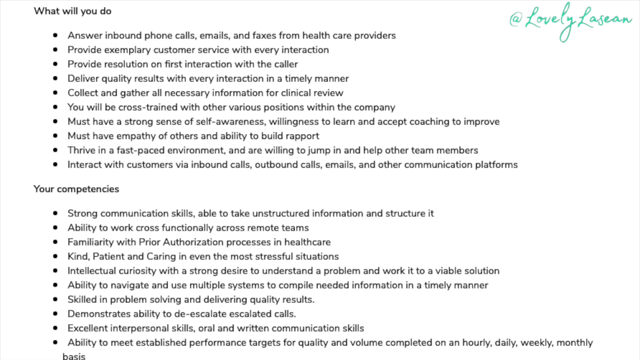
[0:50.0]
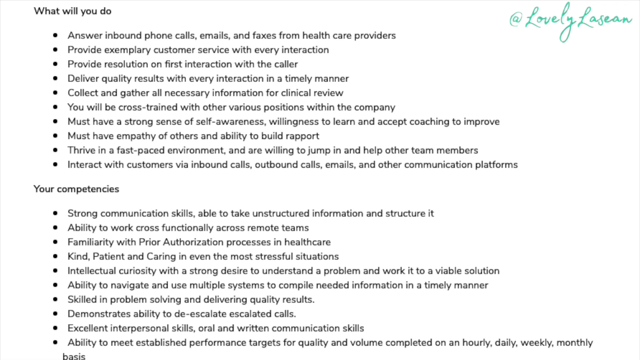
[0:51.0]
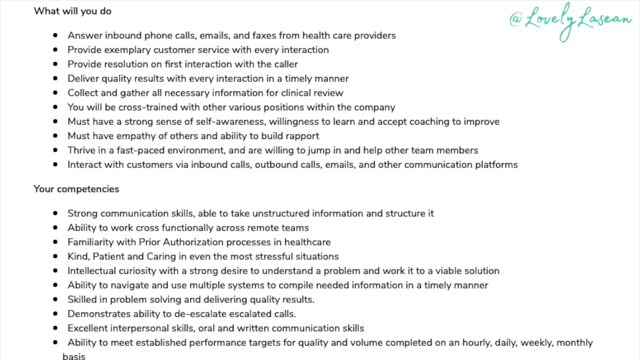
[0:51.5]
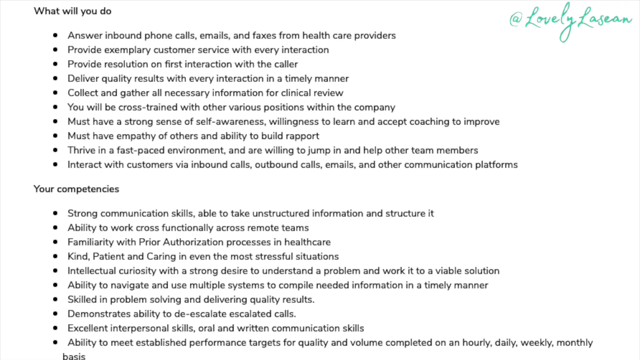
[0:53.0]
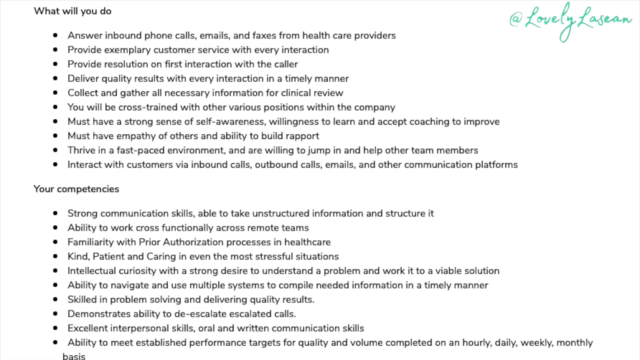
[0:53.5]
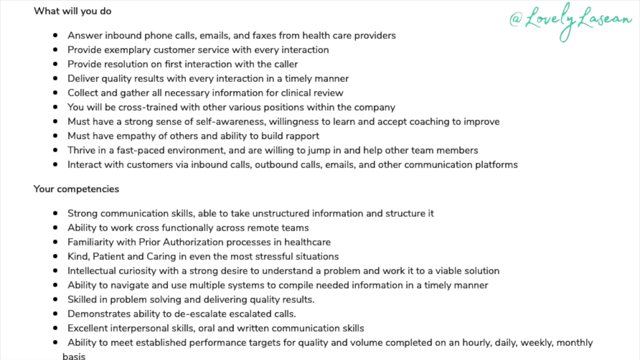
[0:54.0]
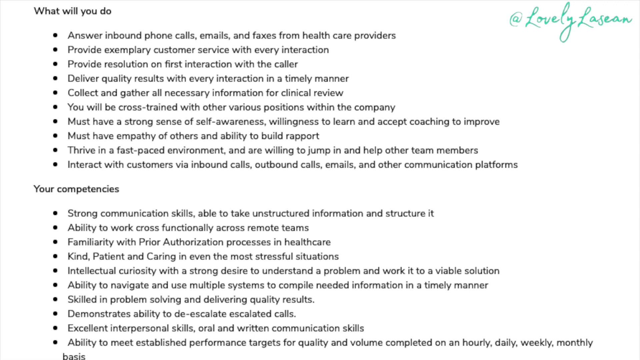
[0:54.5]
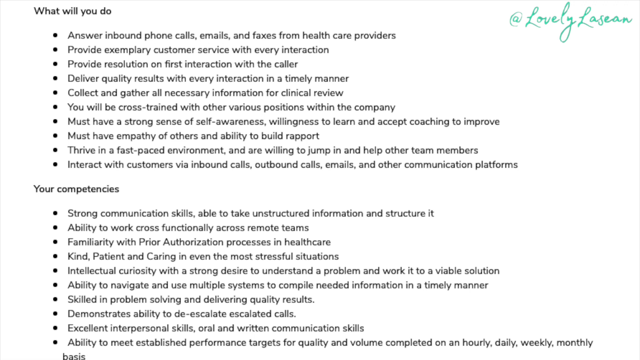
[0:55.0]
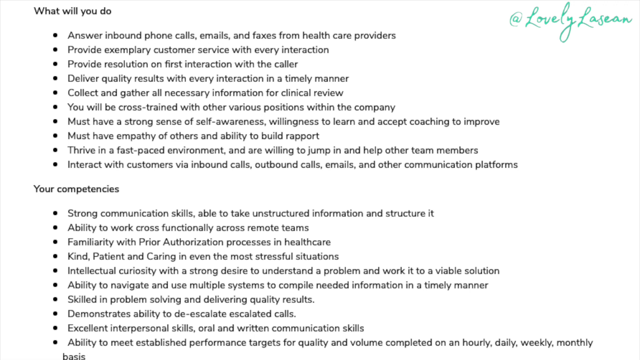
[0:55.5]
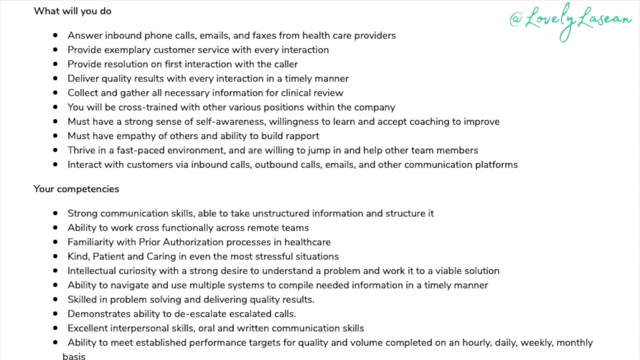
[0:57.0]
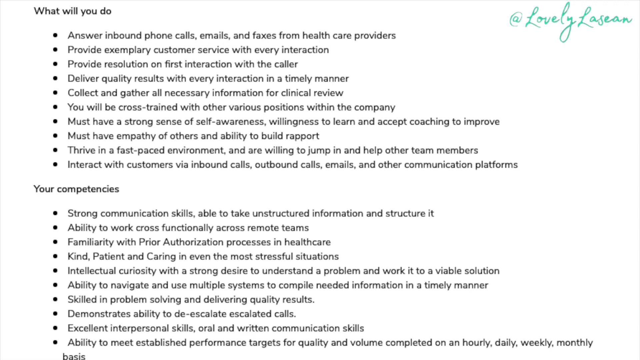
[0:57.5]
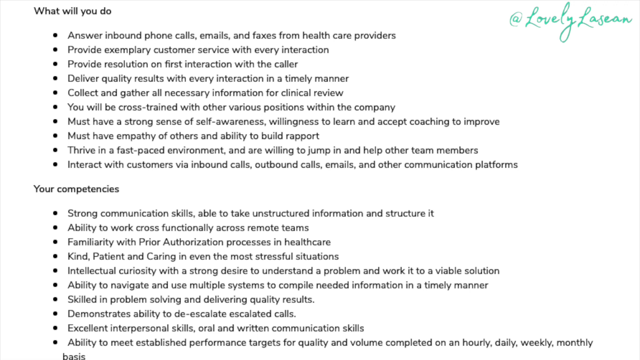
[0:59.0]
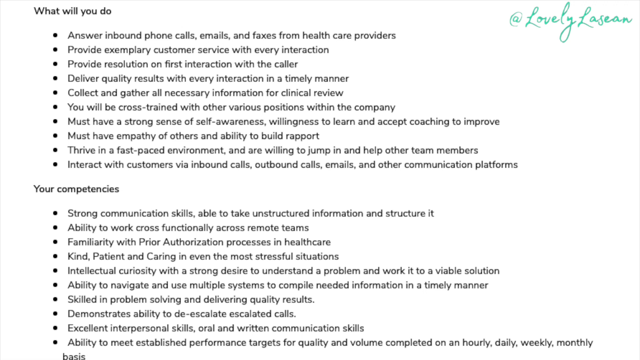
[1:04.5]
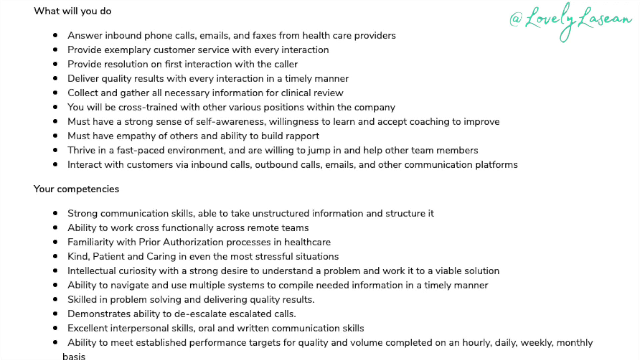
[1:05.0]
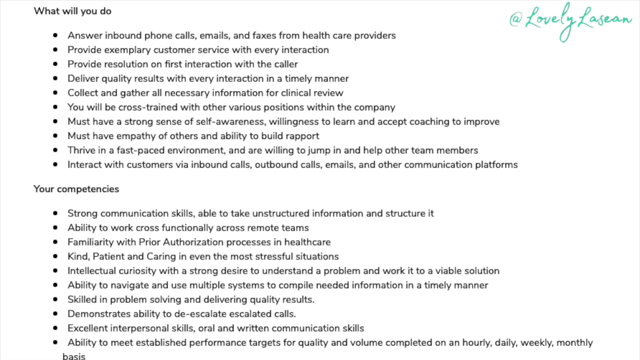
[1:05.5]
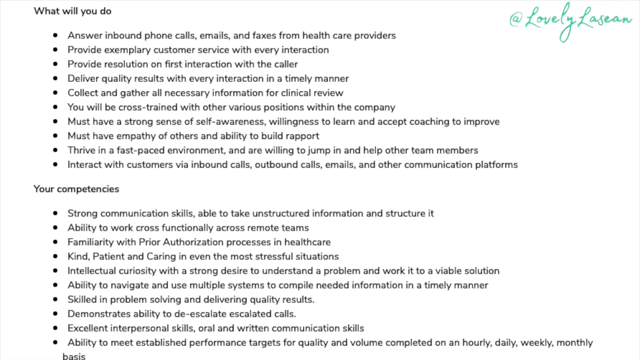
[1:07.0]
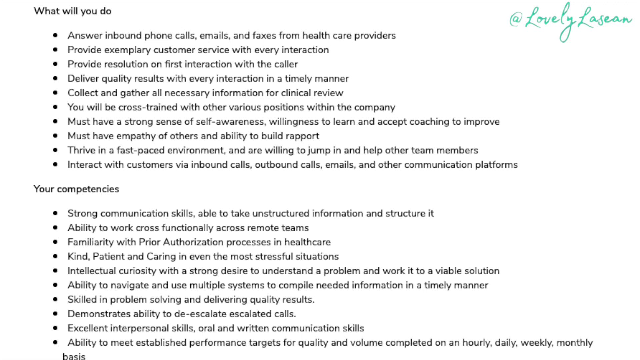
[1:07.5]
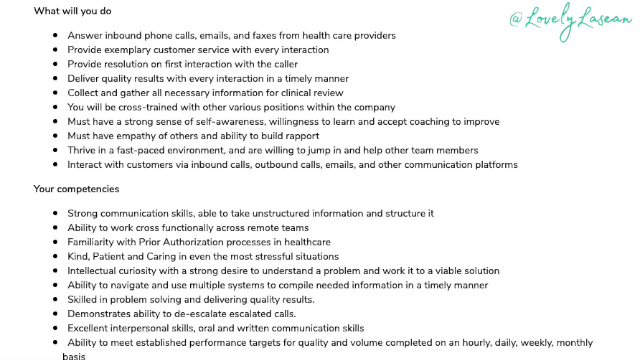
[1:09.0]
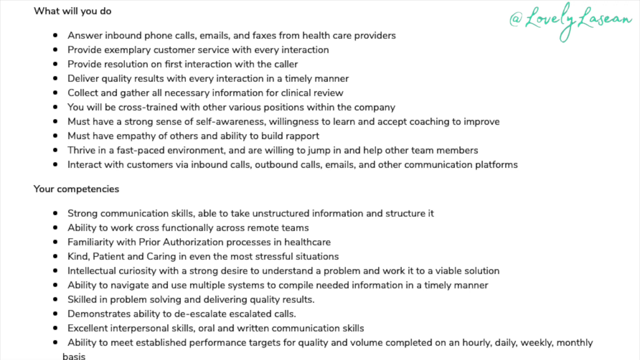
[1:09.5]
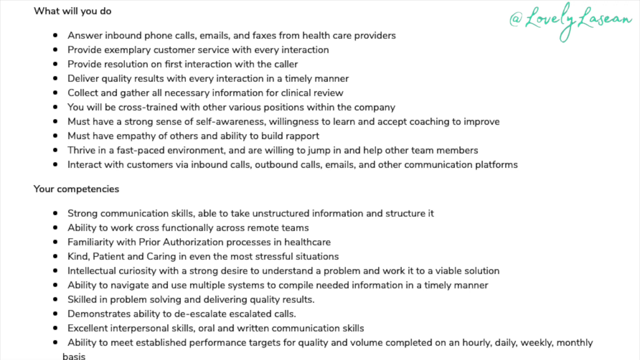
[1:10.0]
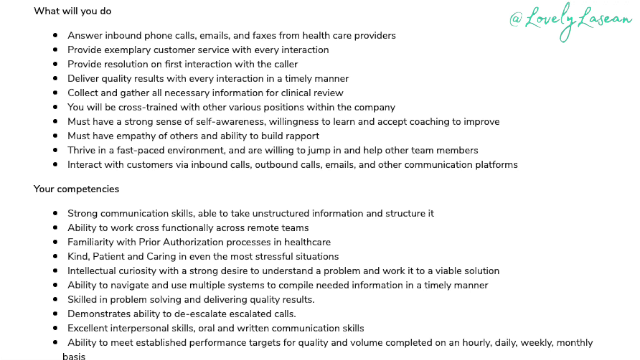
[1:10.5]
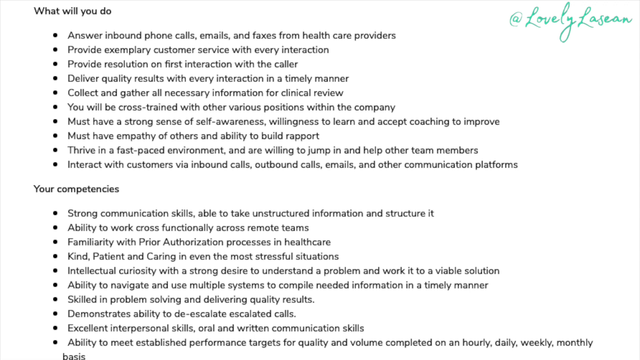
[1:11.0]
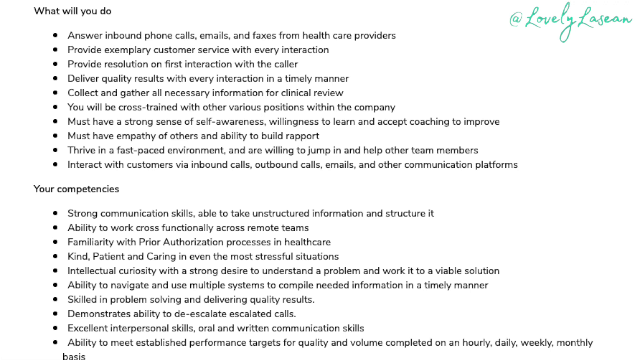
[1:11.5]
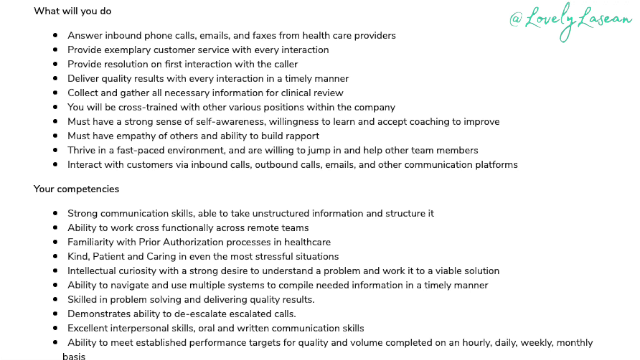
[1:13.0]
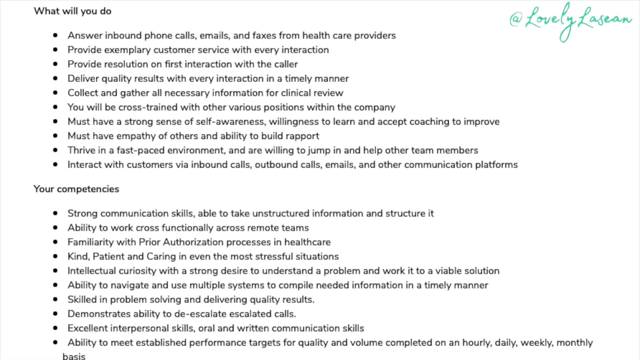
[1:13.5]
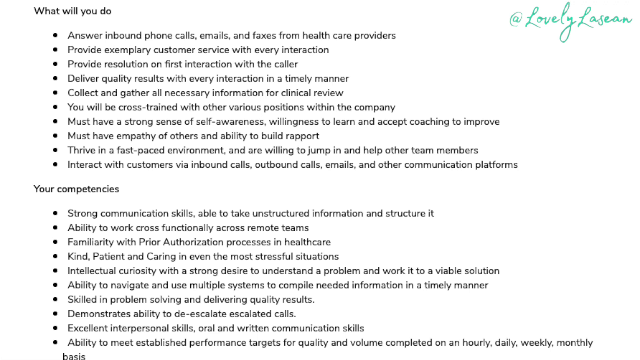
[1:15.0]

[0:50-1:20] An ad for a brand begins; it seems to advertise the brand and to be looking for people to work for the company. The woman has long brown hair and wears three different dresses. She lifts the product so it can be seen. The next screen shows an overview of how the app looks. It seems they are looking for a specialist: there is an option for applying, specs for what the person will do, and the competencies they are looking for. The woman sits on a chair against a white background, with a flower next to her hair, and she has a tattoo on one of her legs.